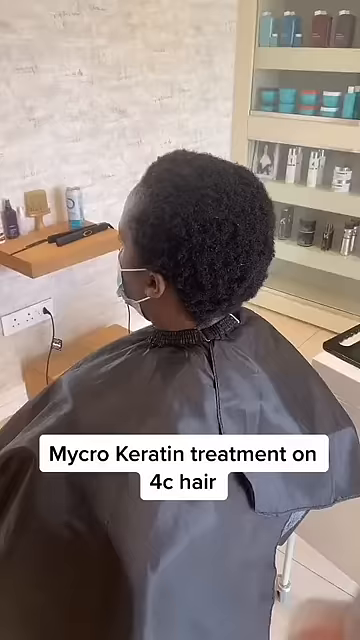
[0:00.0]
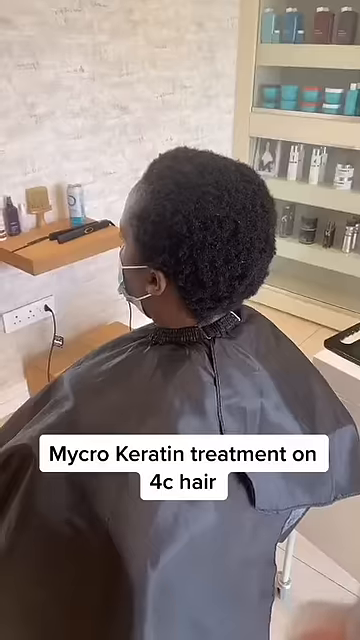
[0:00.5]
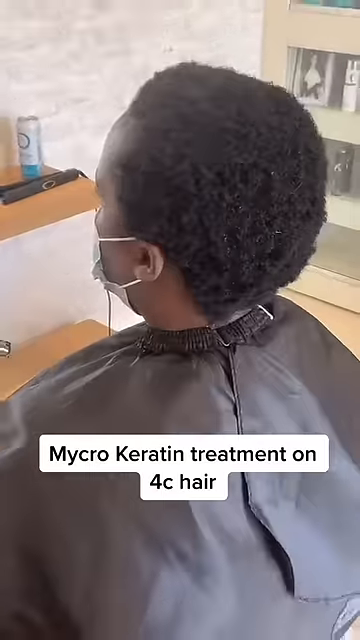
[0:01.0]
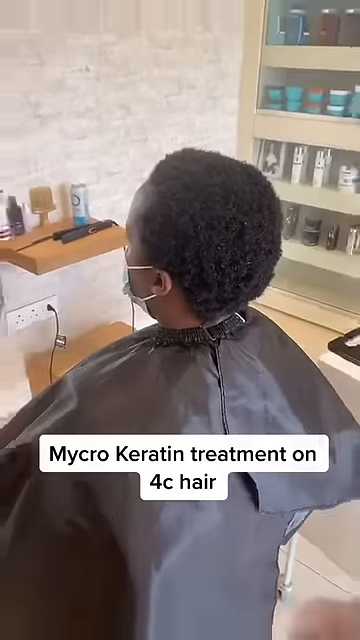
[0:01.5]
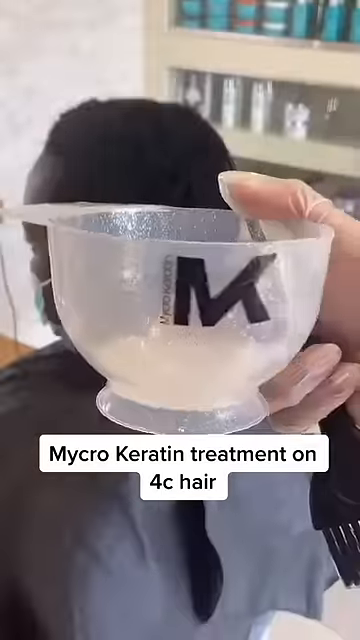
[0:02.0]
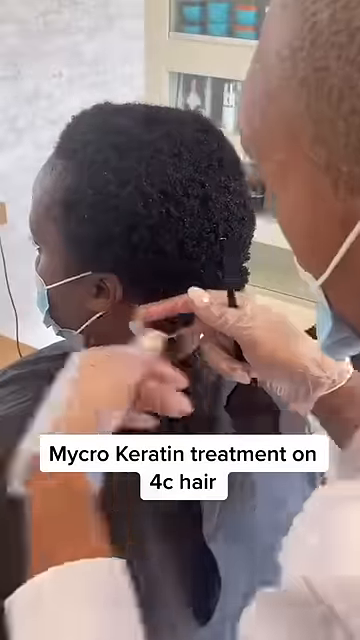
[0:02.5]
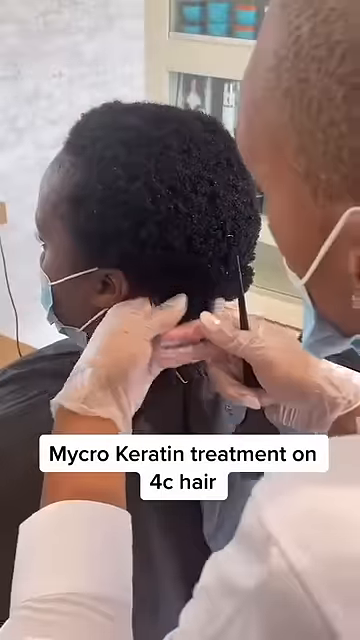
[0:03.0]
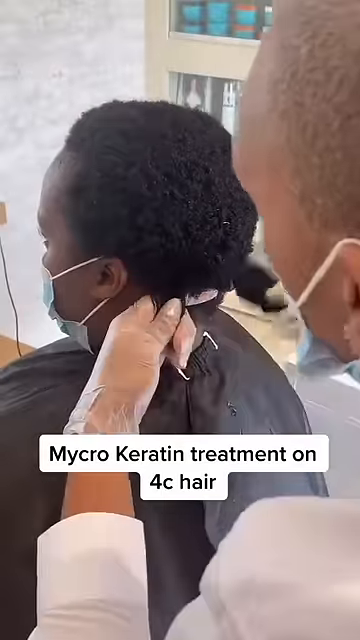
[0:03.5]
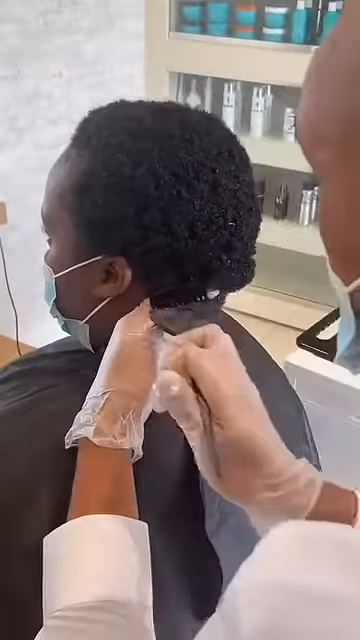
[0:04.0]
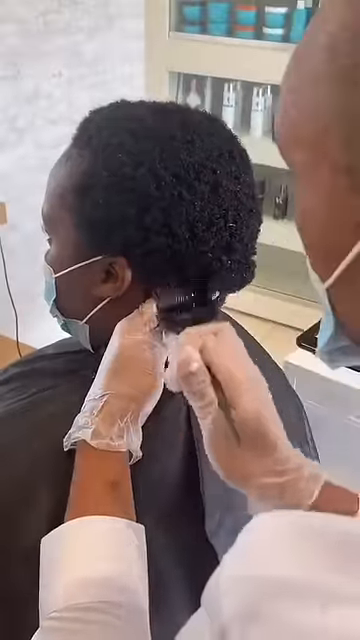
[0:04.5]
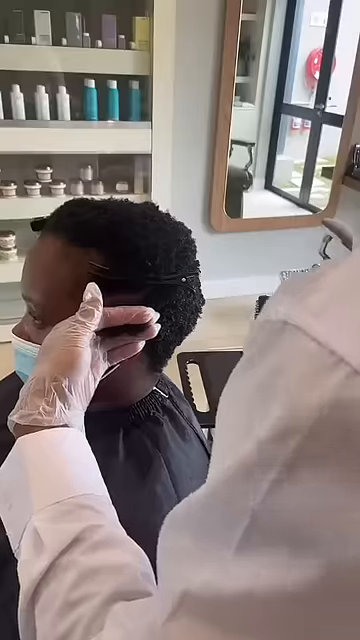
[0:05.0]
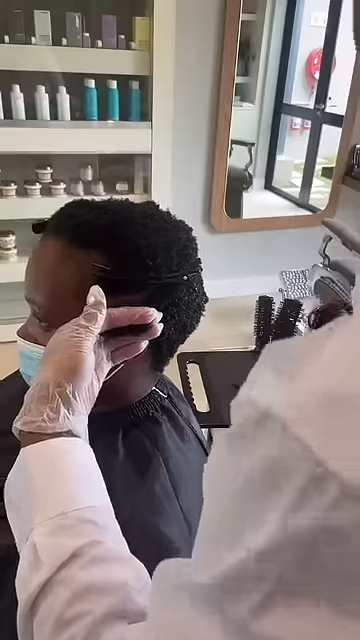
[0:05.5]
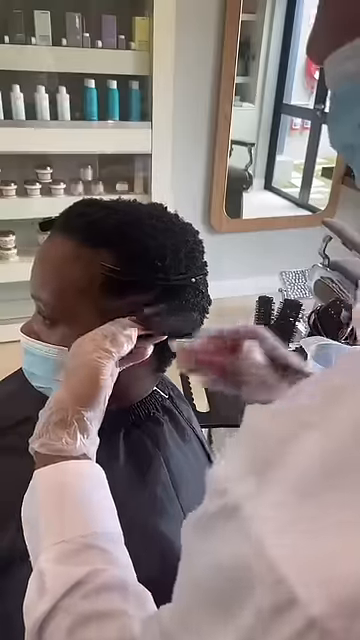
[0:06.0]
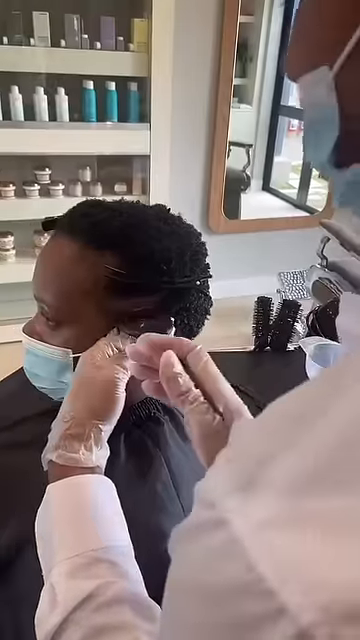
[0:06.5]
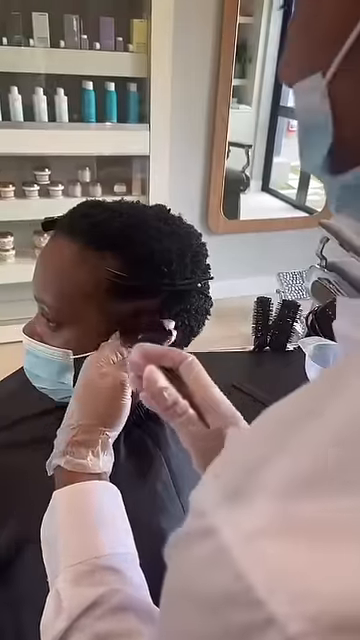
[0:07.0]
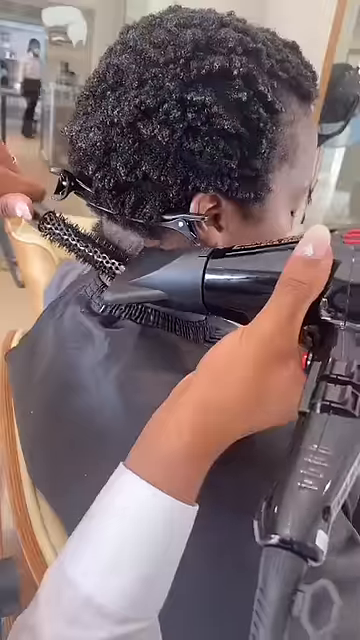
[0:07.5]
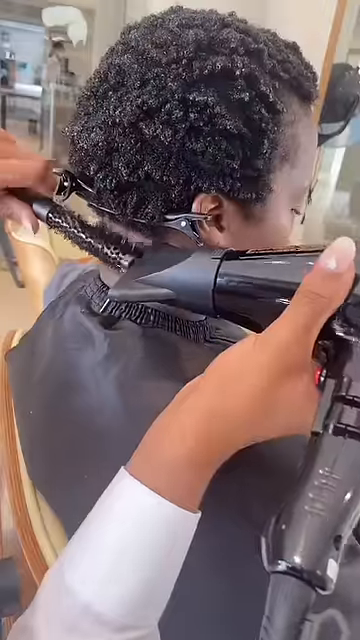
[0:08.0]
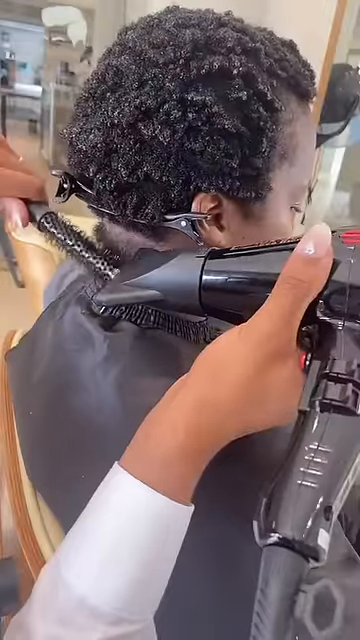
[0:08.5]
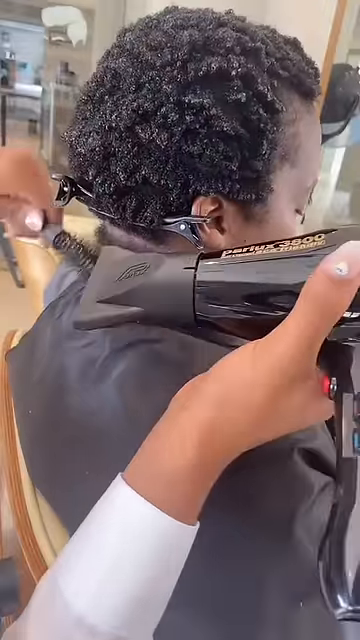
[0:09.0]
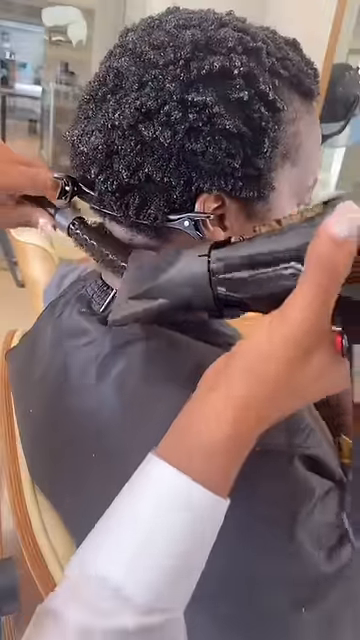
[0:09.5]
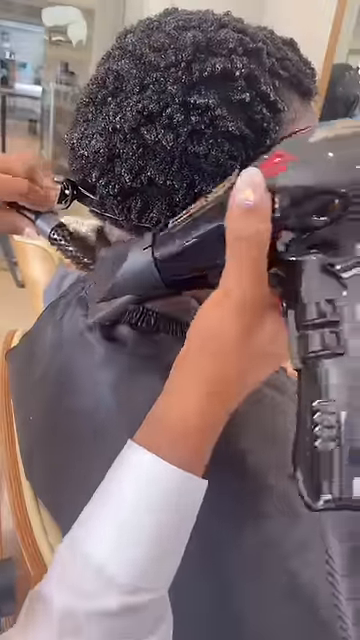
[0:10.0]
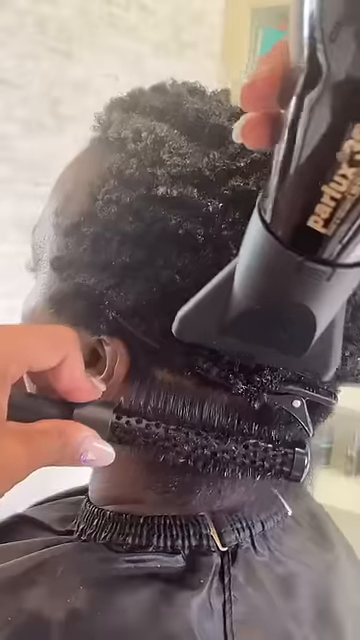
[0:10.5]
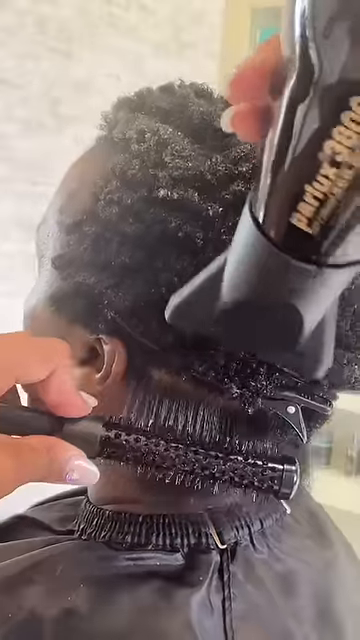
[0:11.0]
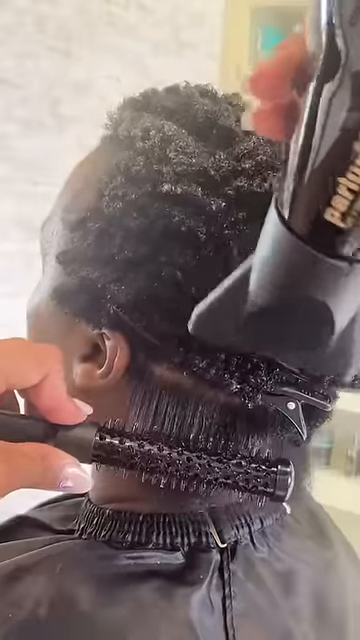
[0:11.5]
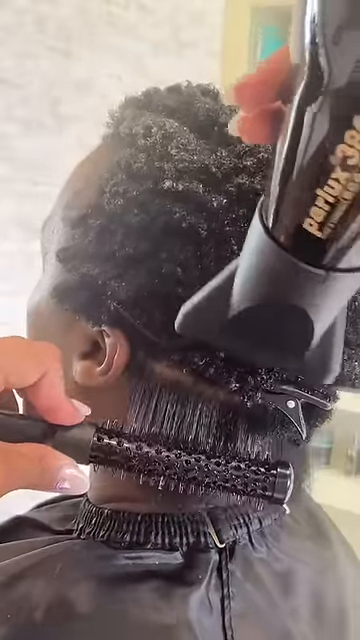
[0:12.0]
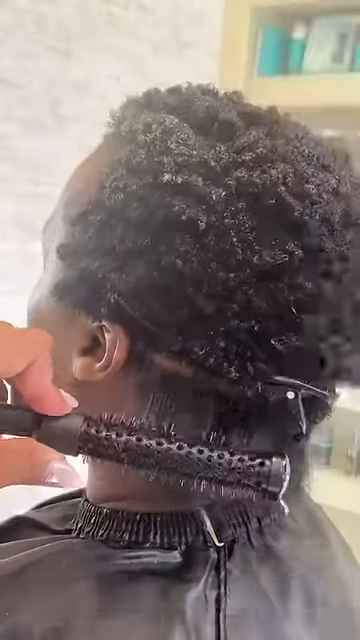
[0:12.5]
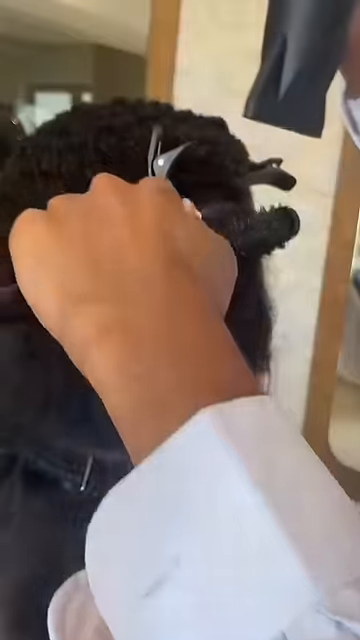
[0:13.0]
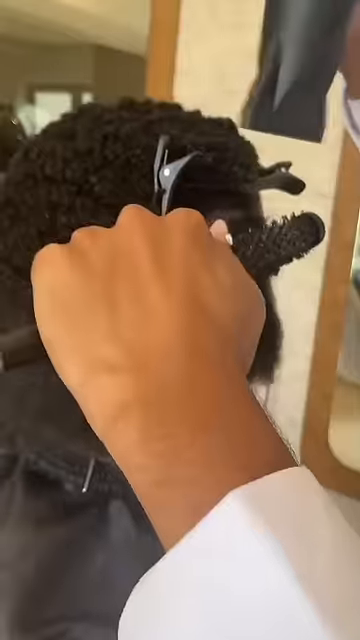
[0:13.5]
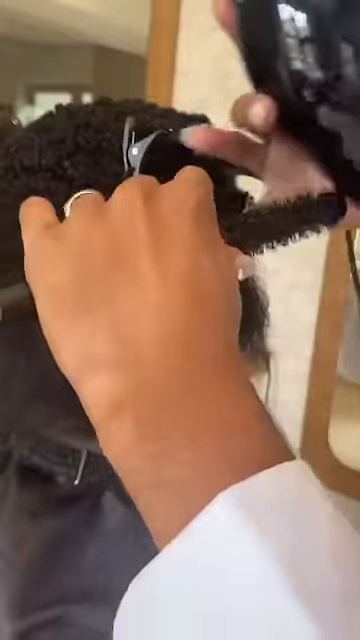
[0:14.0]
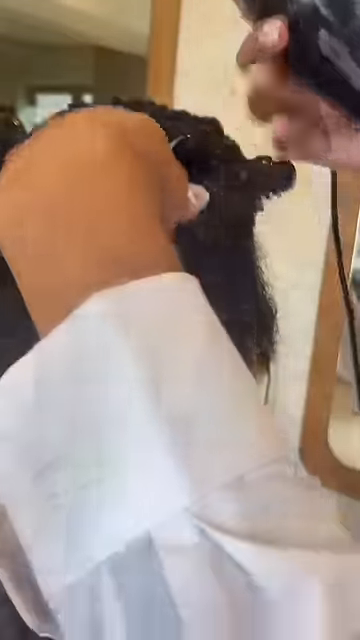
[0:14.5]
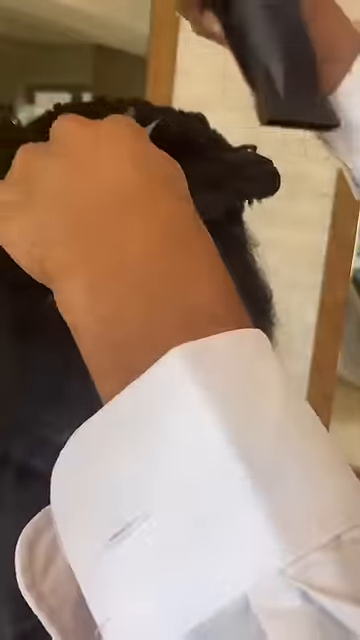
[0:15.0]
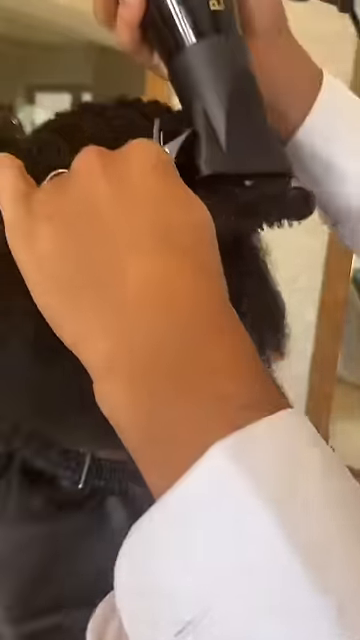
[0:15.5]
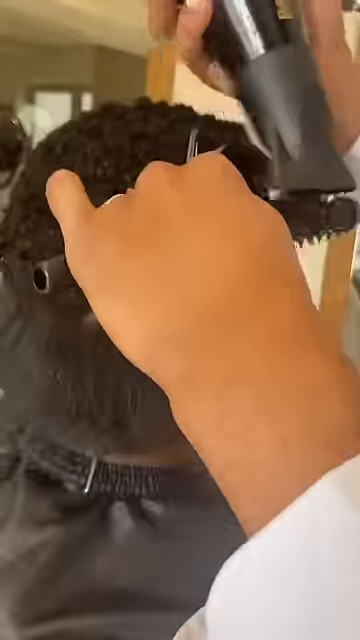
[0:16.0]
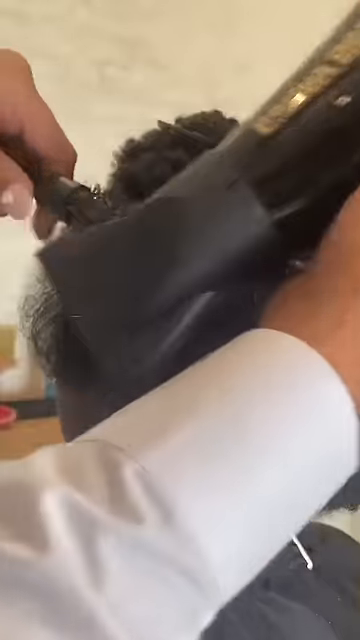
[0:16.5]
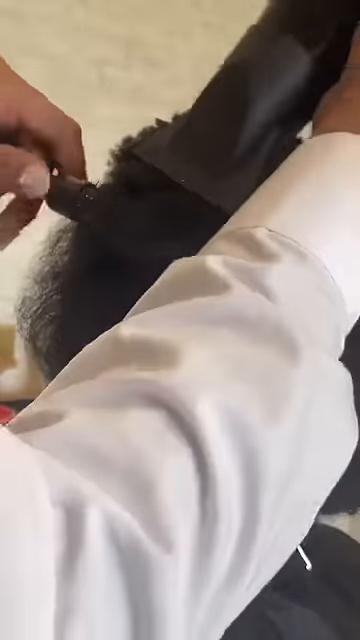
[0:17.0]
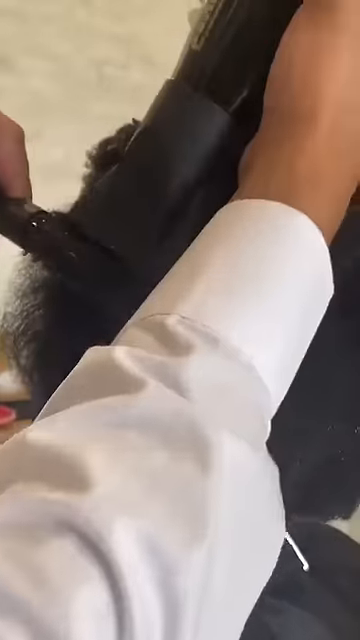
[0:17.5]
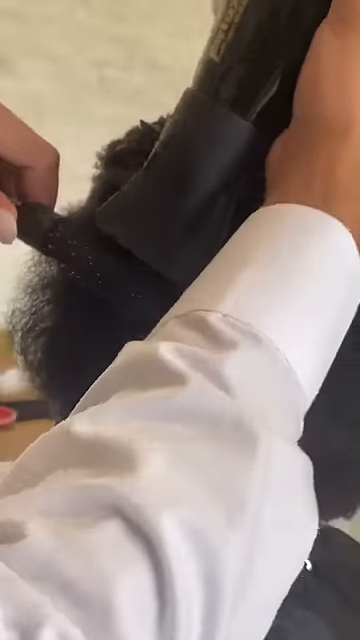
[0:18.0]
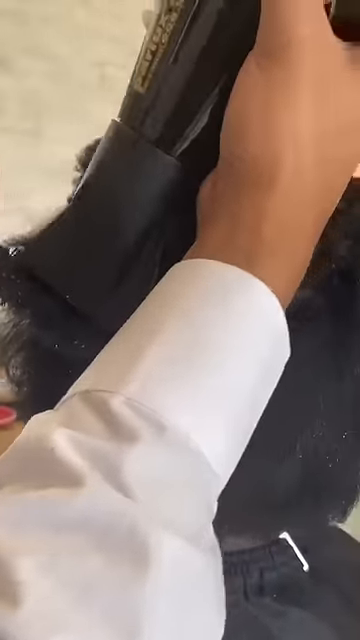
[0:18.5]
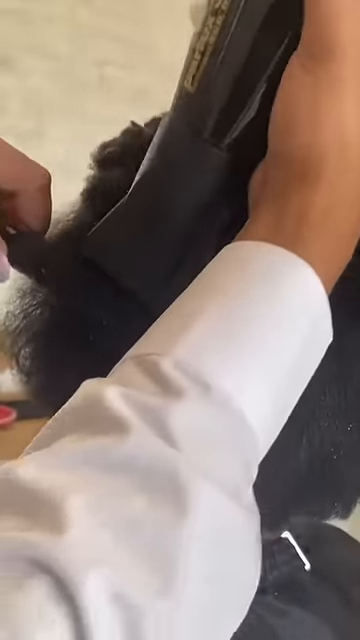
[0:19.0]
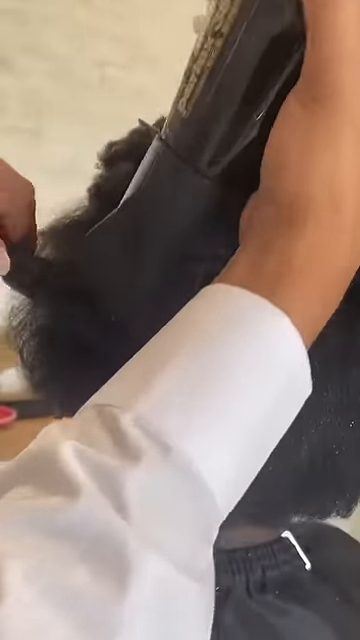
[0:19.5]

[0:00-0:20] A woman sits in a salon chair at a hairstylist's. At the beginning of the video, text reads "microkeratin treatment on 4C hair." She is a Black woman with very dark, very tight, curly hair that is pretty short. She wears a blue surgical mask and a black cape over her clothes. Another person works on her hair, applying some product to it and using a small circular brush to brush out the bottom of it, apparently putting the treatment on. The setting looks like a professional salon: behind them is a case full of different products lined up behind glass. A little table holds a hair straightener, some sprays and a brush, and there is a little bowl of the product being applied, with "microkeratin" on it. The shots come from different angles, some closer up and some from different sides, with several cuts between different steps of the process.